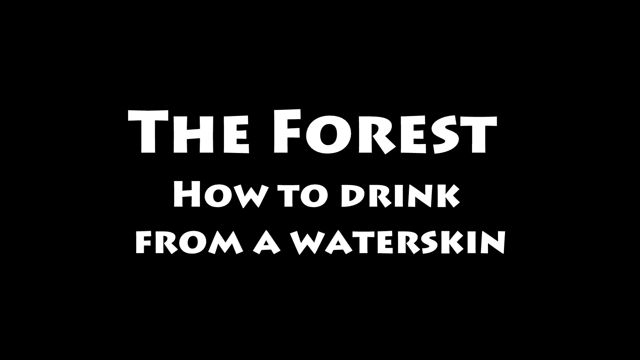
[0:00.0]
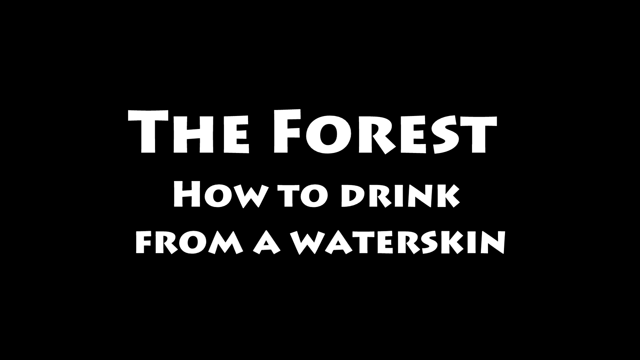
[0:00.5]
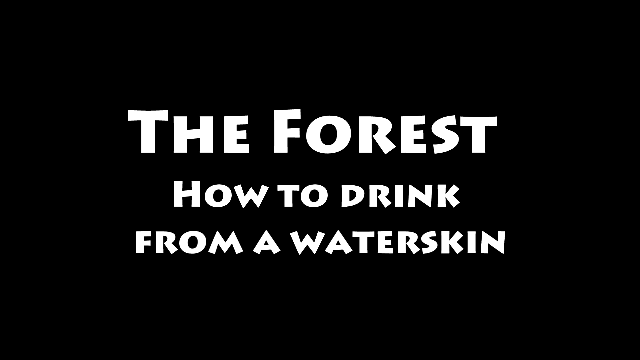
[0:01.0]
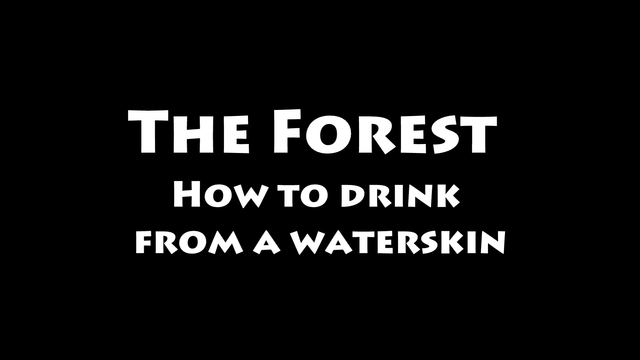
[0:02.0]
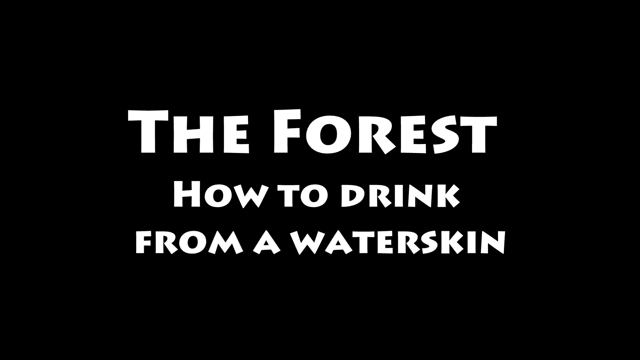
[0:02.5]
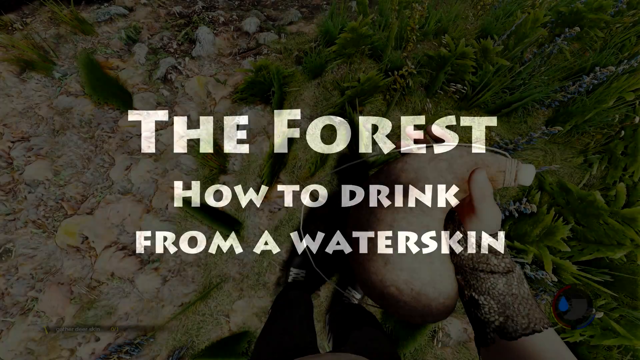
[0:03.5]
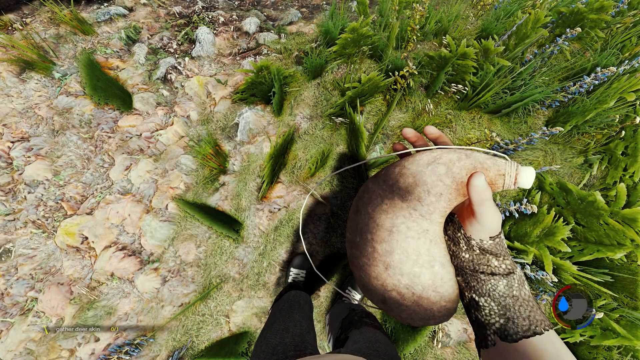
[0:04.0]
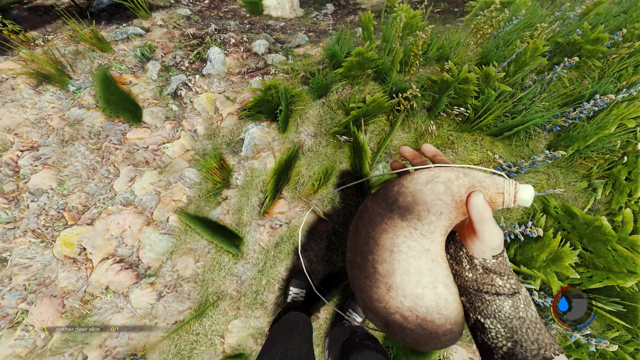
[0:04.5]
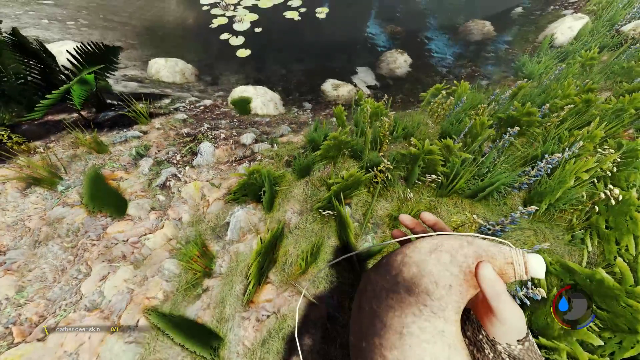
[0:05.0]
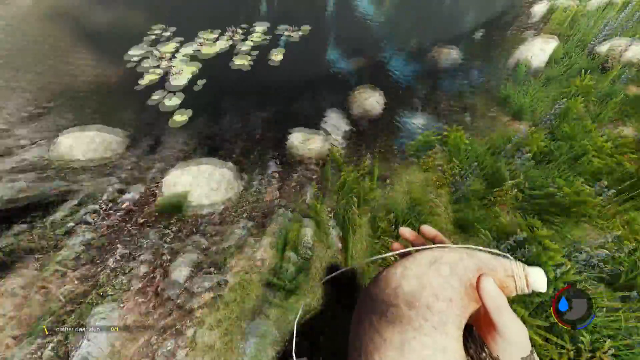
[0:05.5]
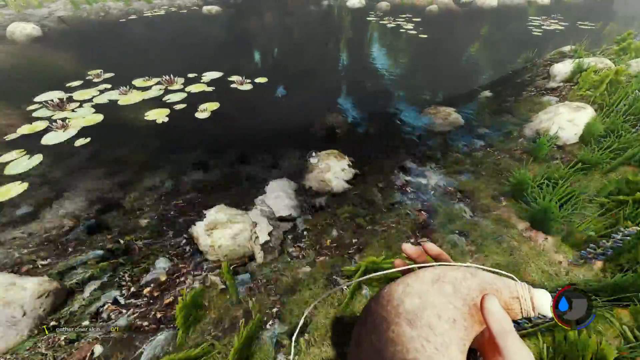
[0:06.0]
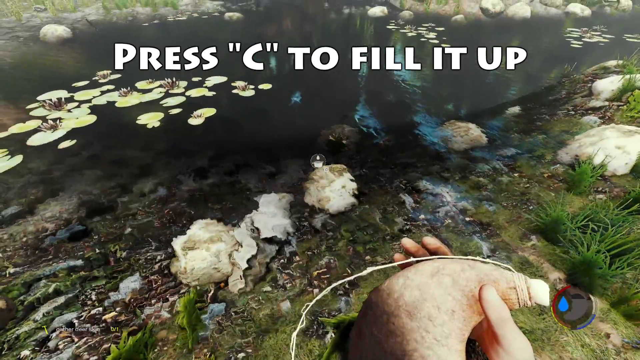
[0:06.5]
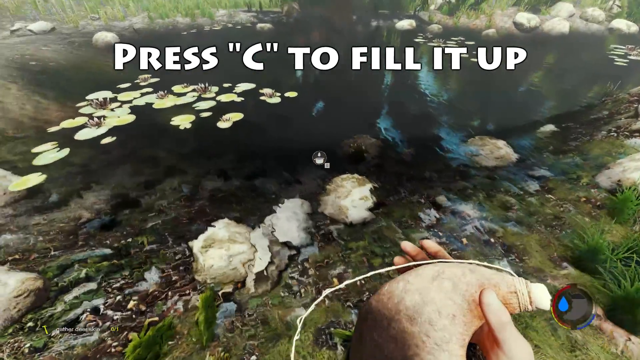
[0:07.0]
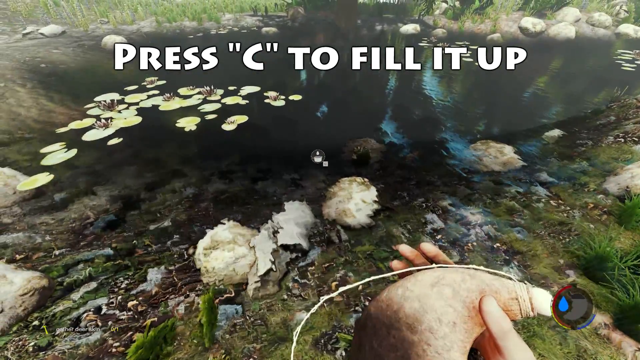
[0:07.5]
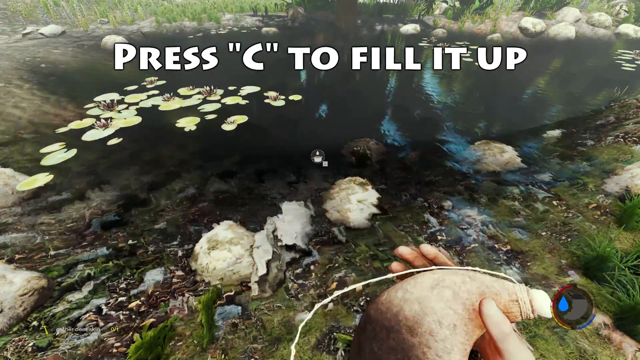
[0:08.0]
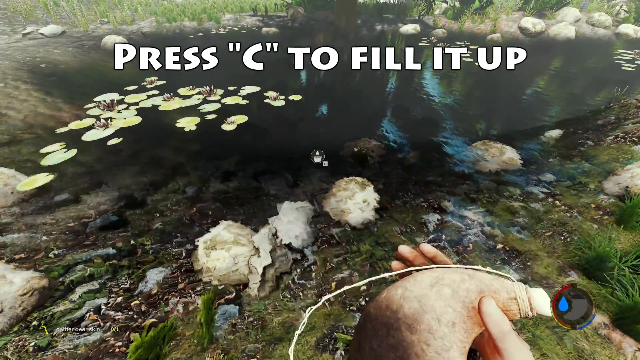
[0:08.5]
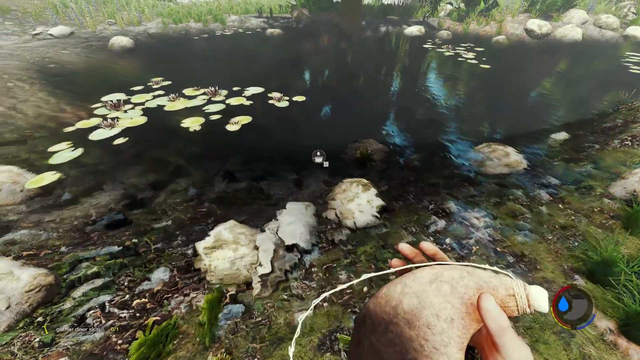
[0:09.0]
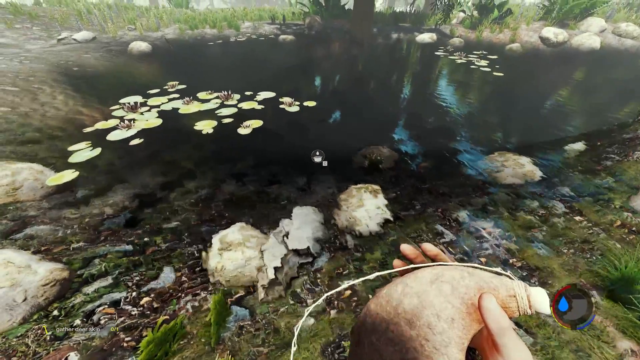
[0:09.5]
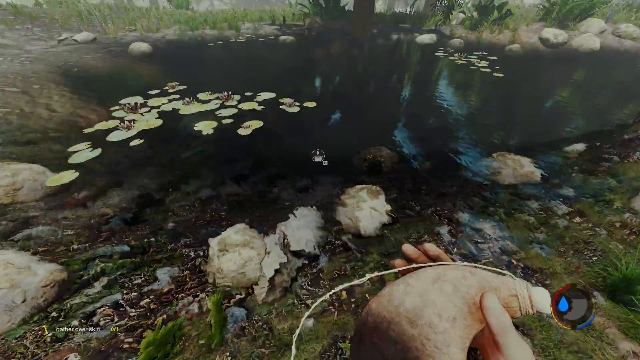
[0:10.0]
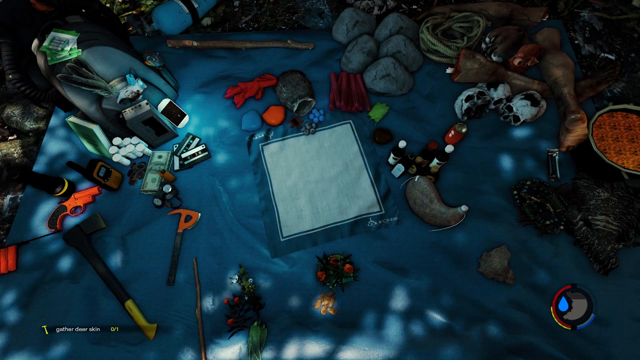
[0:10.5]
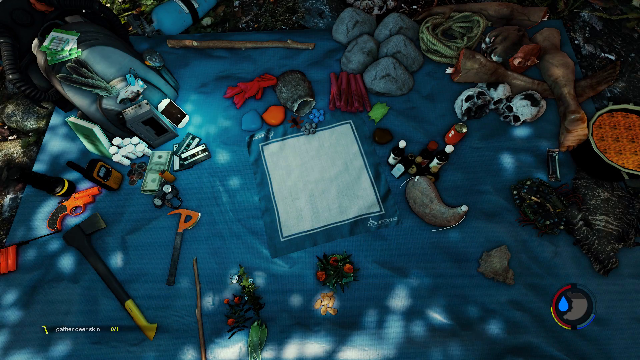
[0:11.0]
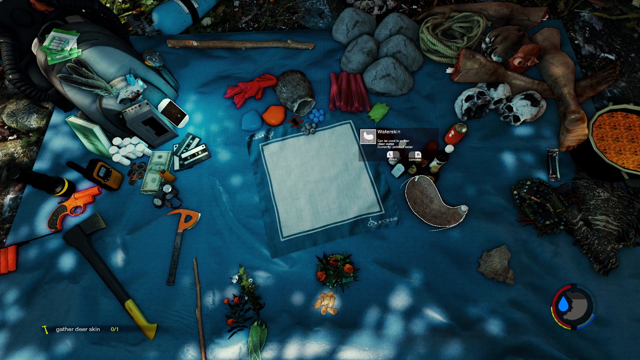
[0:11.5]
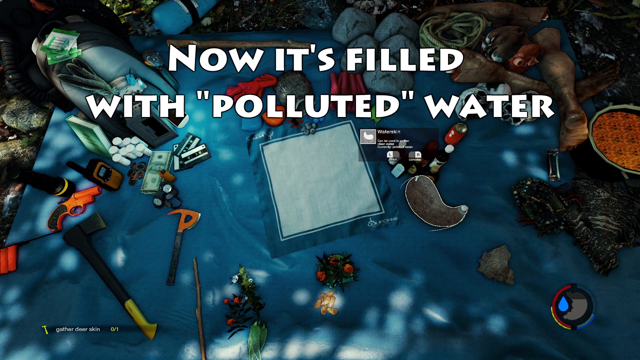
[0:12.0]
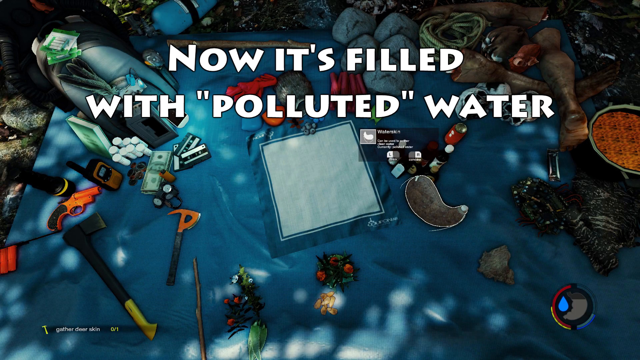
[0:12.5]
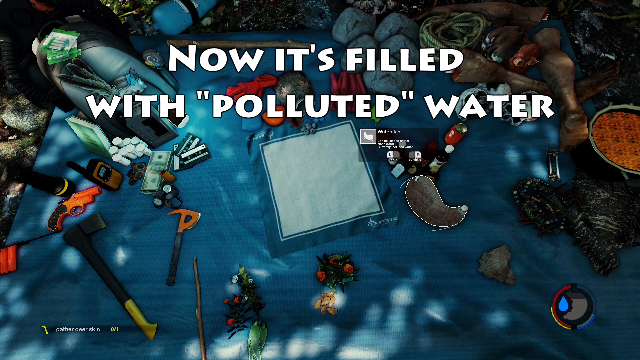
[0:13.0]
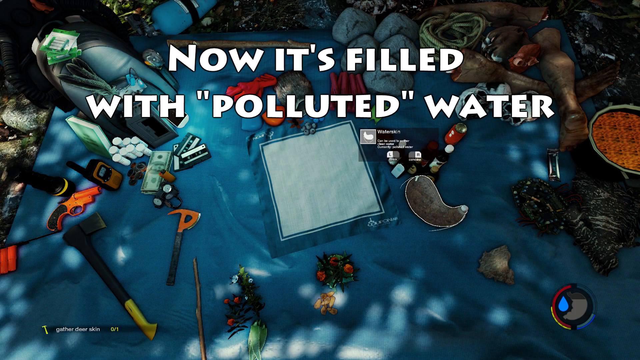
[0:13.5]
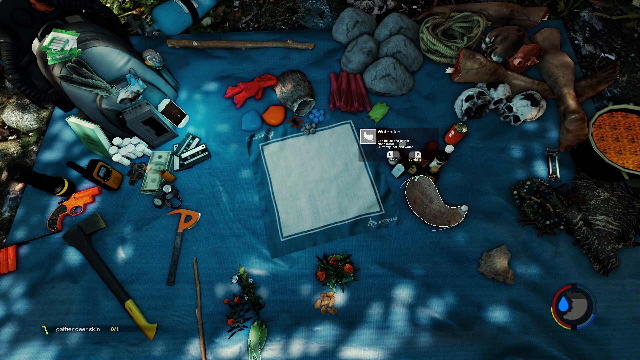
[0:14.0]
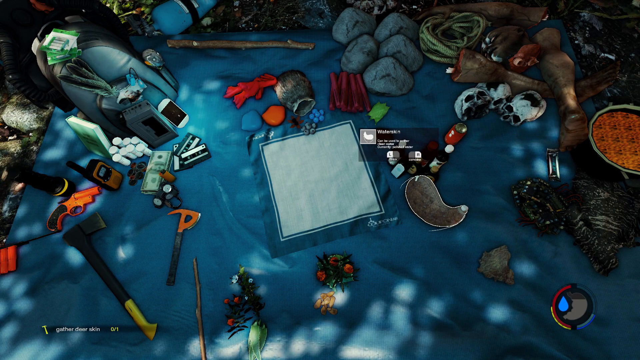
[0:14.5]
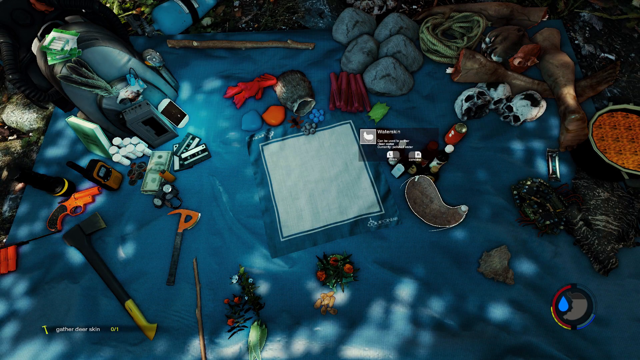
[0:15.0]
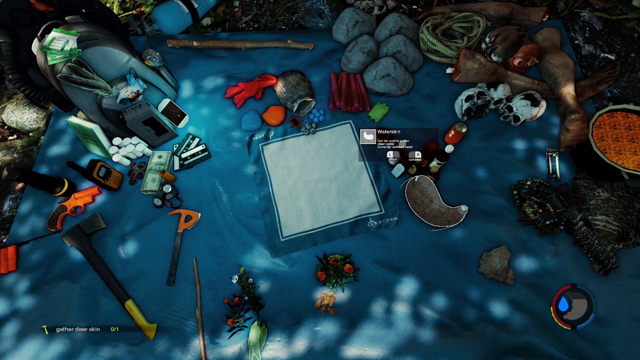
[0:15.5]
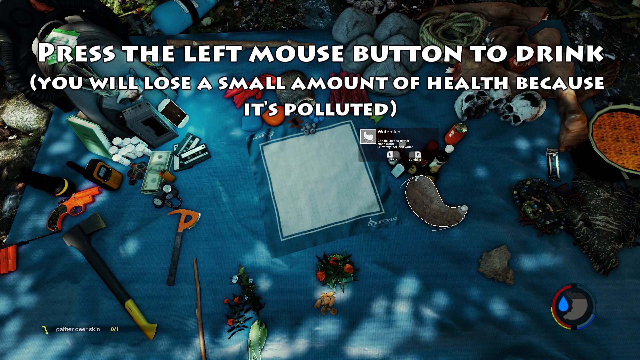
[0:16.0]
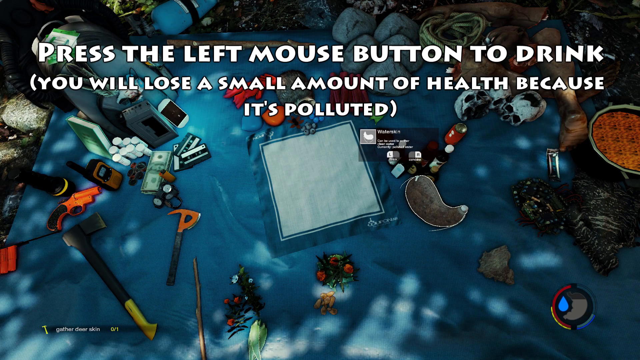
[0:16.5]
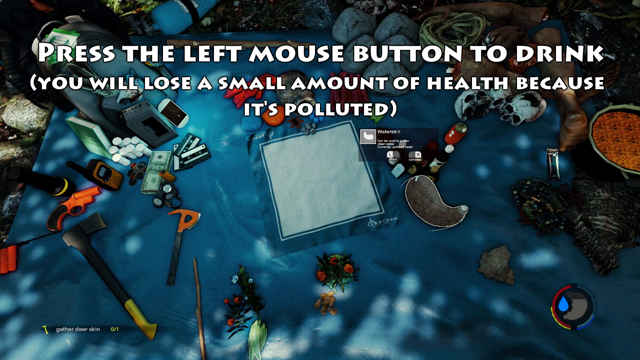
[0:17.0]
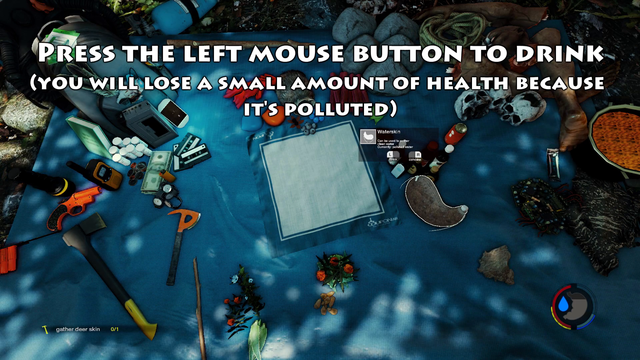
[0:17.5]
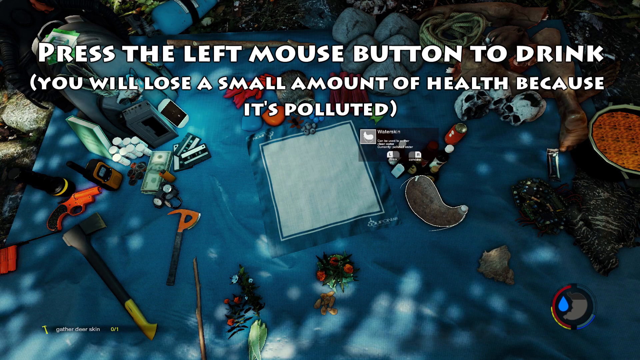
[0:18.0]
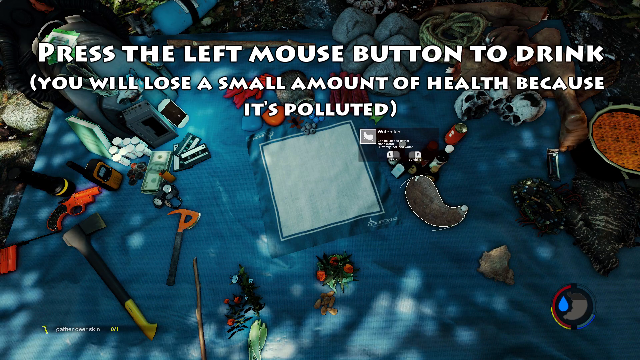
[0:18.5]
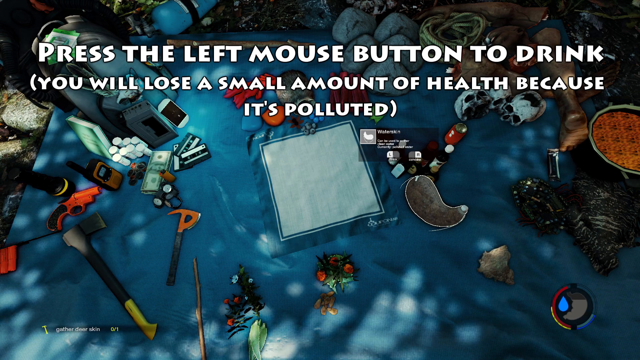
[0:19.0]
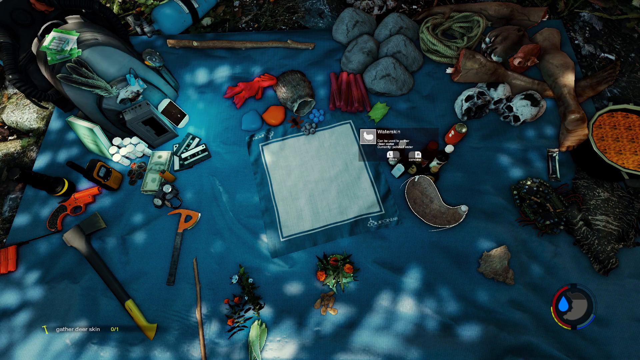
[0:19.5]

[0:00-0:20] The video opens on a black screen with white text that reads "The forest, how to drink from a waterskin." The person recording seems to be on the side of a river or creek, holding an object that looks to be the waterskin. The waterskin has a kidney-like shape with some twine at the top. The footage is very stable, so it seems to be recorded from a body camera or glasses camera. A caption at the top of the screen reads "press C to fill it up." Lily pads and other vegetation are on top of and around the small creek or riverbed, and stones are visible inside, as the water is clear. The next screen shows an animated workspace with different tools on top of a table. The waterskin is also on top of the table, now filled with polluted water.